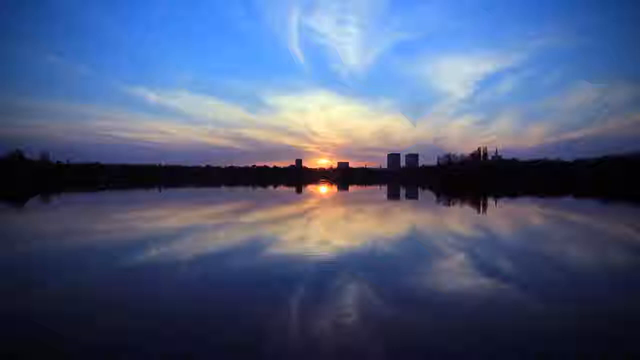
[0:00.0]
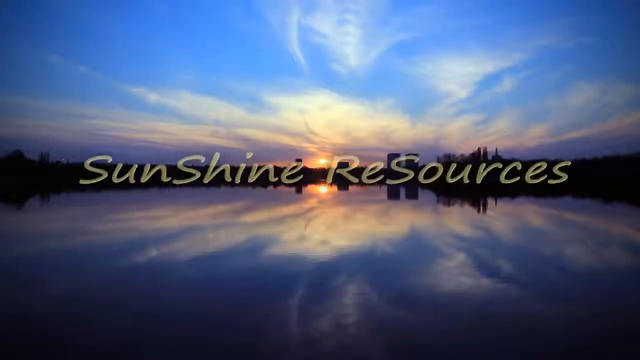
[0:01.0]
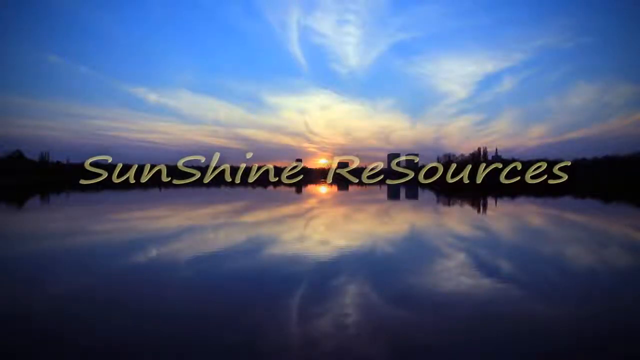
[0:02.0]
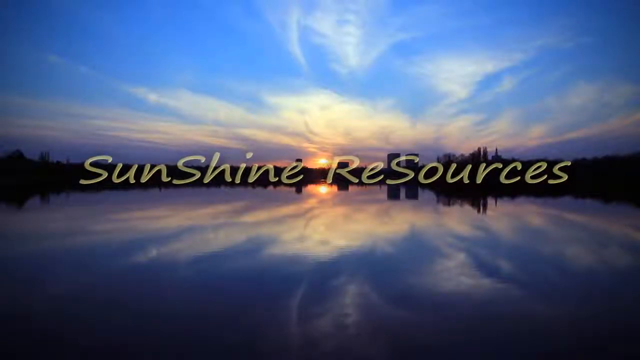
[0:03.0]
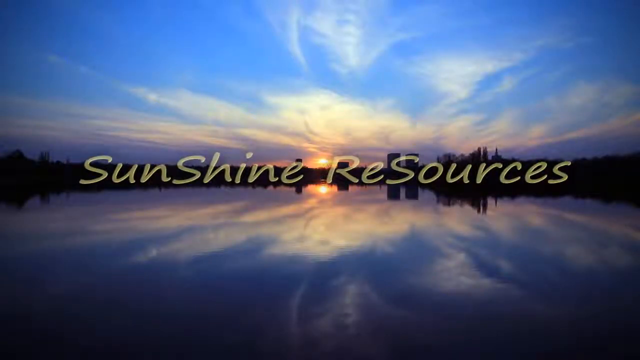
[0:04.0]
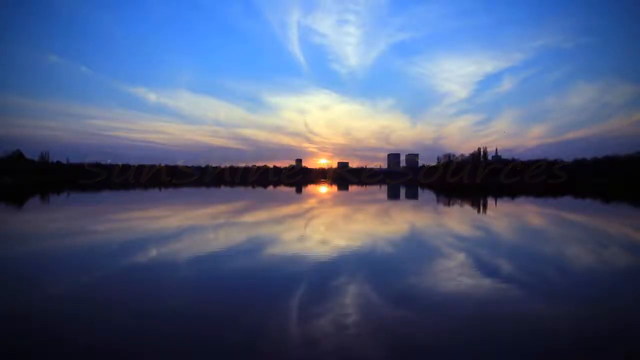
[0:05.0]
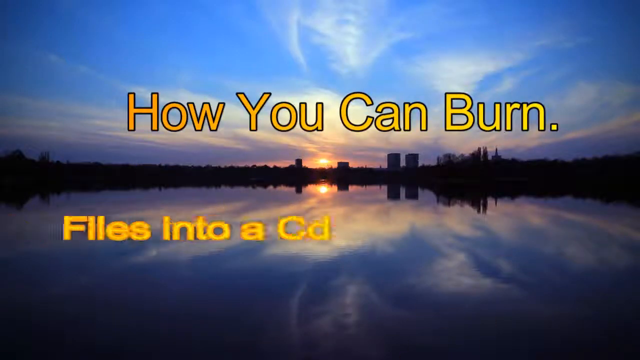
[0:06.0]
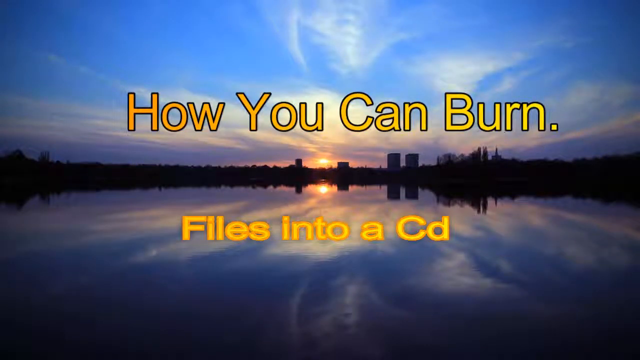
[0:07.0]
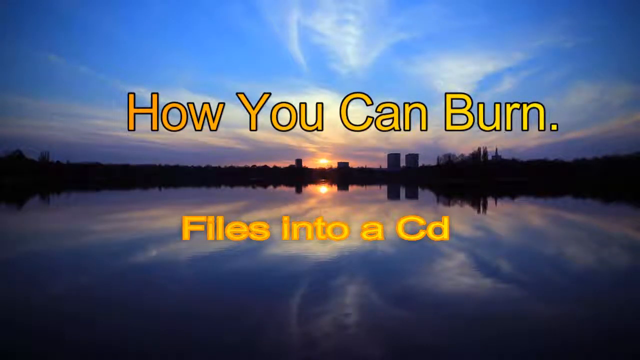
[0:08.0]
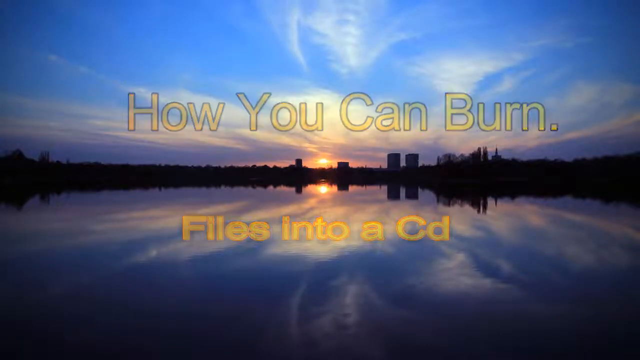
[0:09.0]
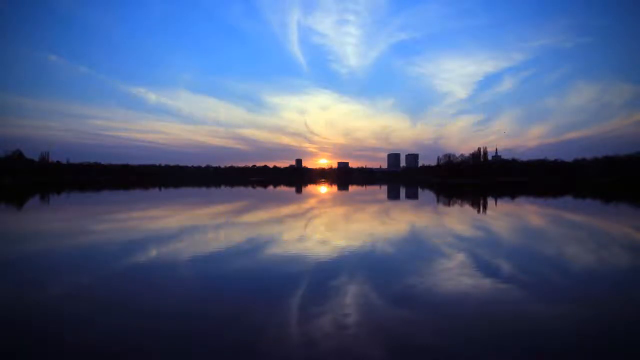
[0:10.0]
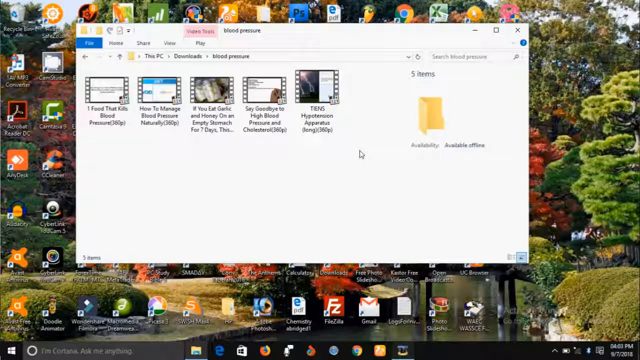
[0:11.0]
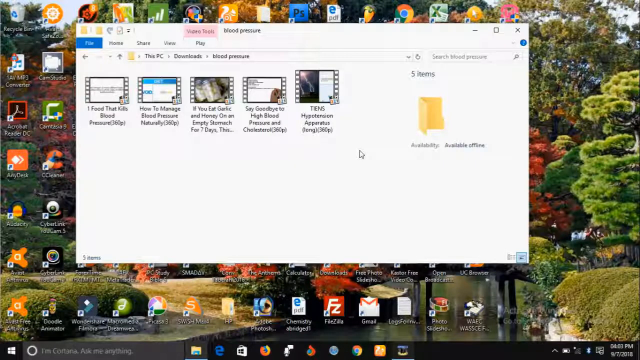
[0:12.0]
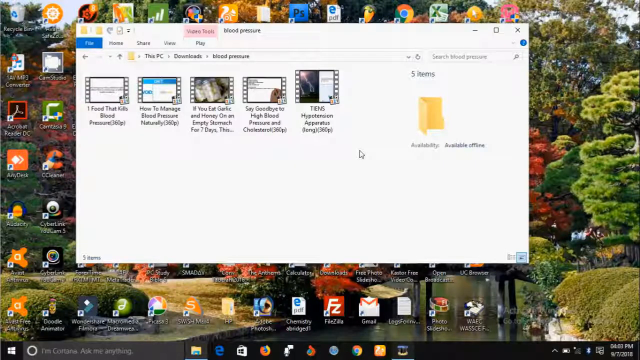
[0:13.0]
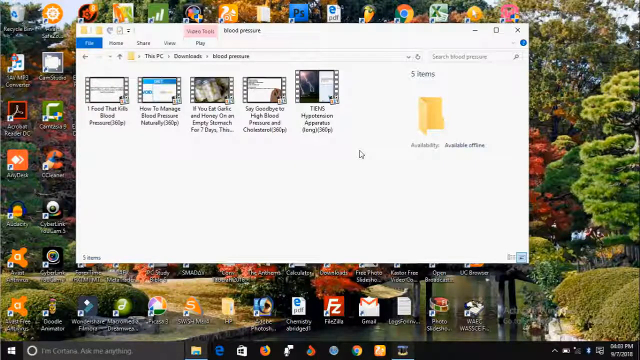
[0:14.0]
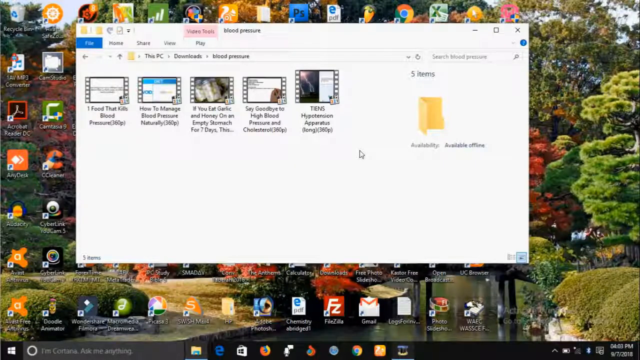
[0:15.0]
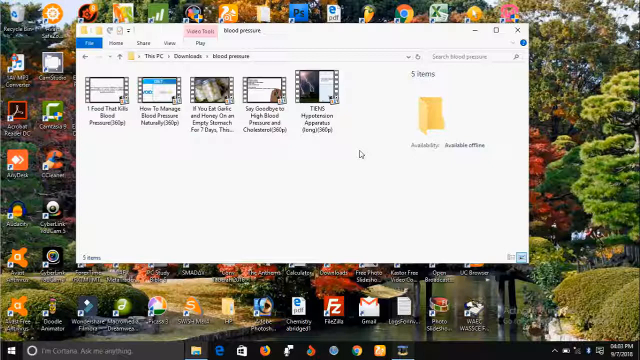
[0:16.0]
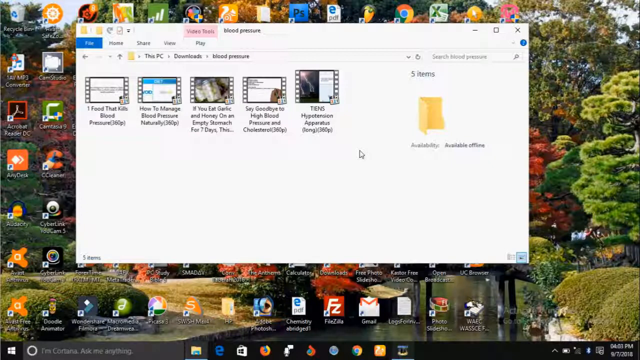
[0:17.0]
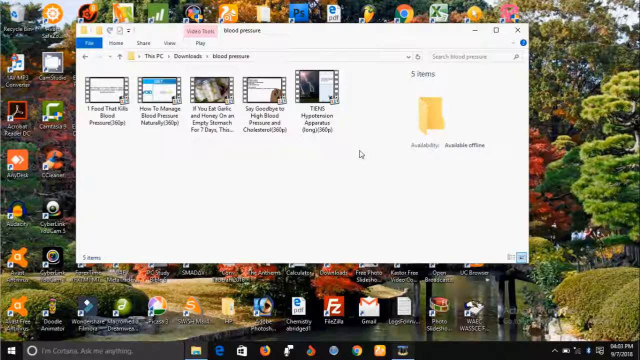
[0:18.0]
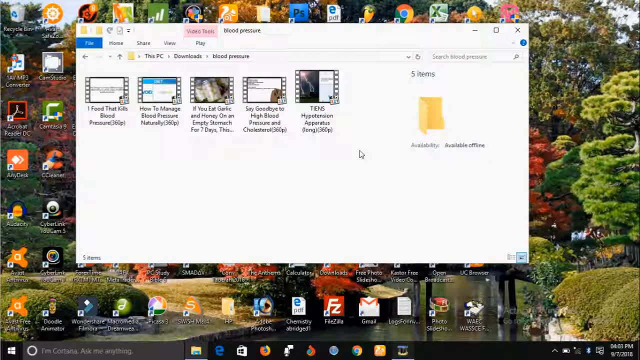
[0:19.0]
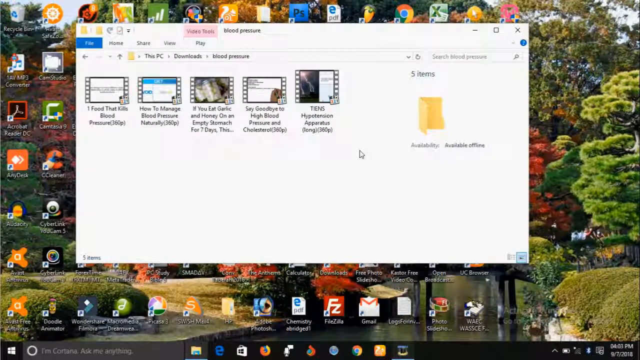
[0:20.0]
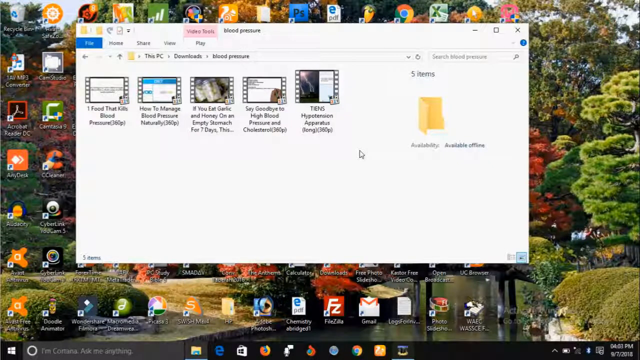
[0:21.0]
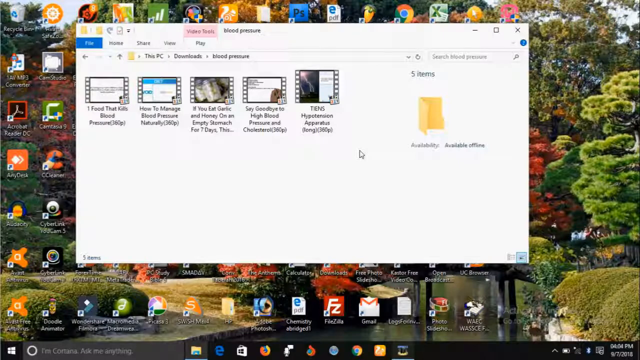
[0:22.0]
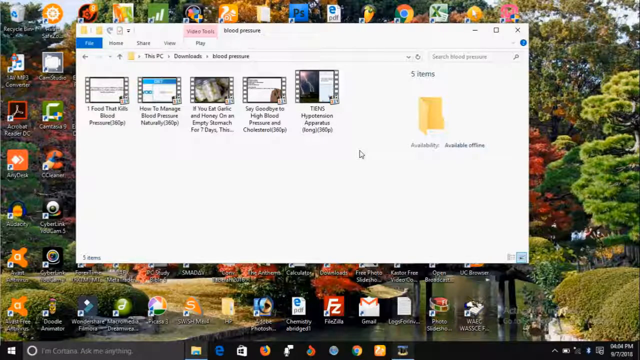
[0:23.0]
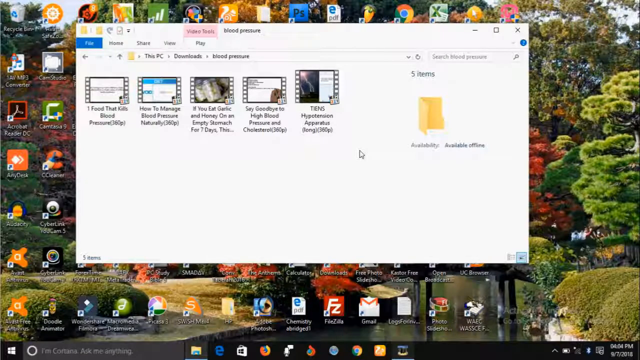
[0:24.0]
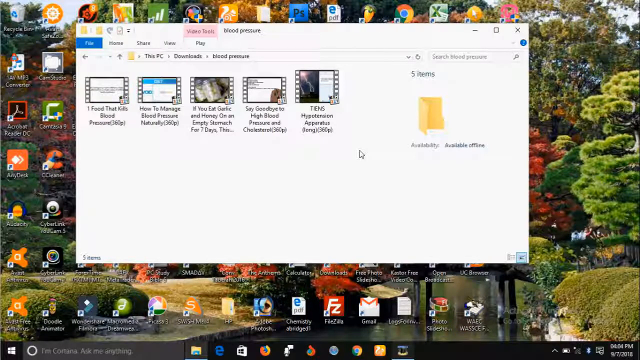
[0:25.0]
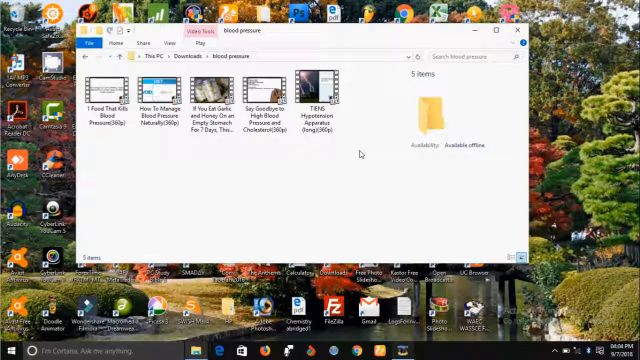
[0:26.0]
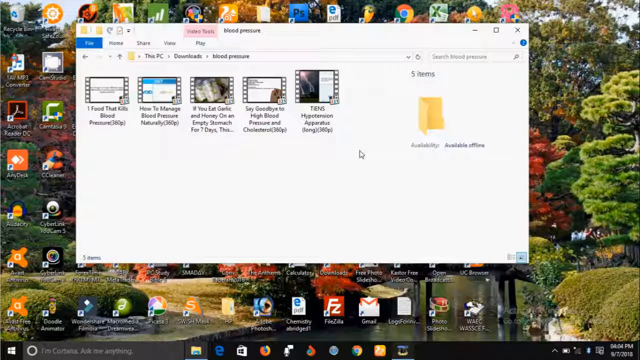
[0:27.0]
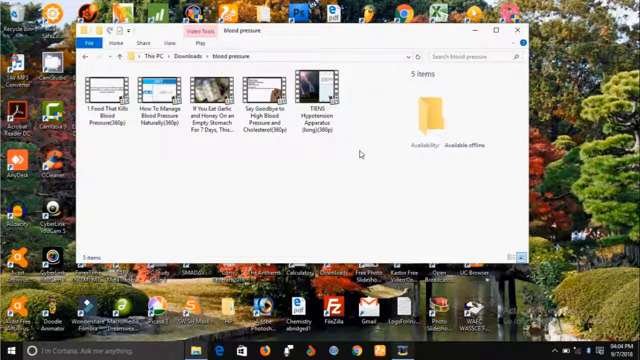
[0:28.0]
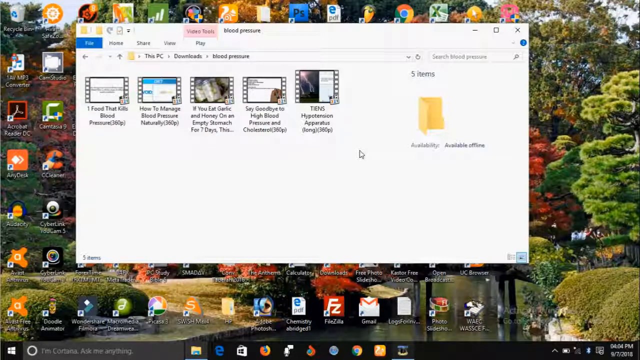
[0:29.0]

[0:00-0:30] A sunset appears, with clouds reflecting the sky and a lake reflecting the sky and the sun; some buildings are on the far side. Text then appears reading "sunshine resources. How you can burn files into a CD". A computer screen follows, open in File Explorer. Plenty of apps are in the background, but the focus is on File Explorer, which shows five videos. The second is titled "how to manage blood pressure naturally", another says "if you eat garlic and honey on empty stomach for three days", another says "say goodbye to high blood pressure and cholesterol", and the last says "hypertension, apparatus". In the top left there is a full recycle bin. The desktop holds plenty of apps, including Adobe Acrobat Reader, Avast Antivirus, PixArt, Gmail, Photoshop Studio, UCL browser, Fruity Loops, Chrome and Excel spreadsheets, as well as plenty of folders.